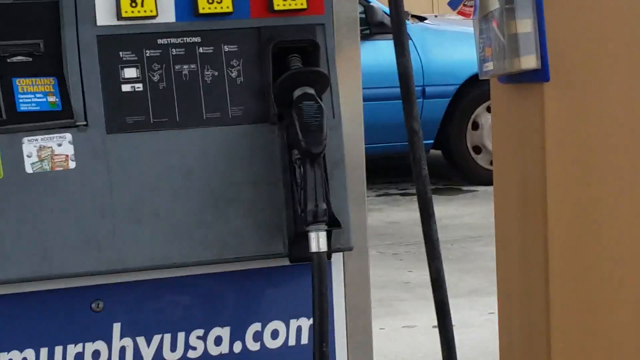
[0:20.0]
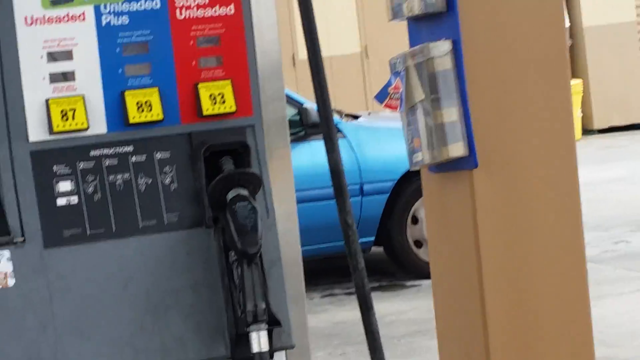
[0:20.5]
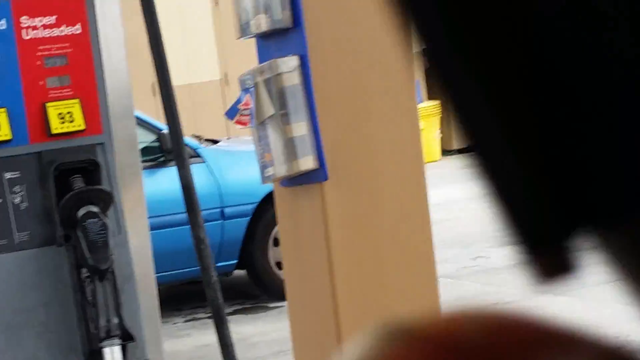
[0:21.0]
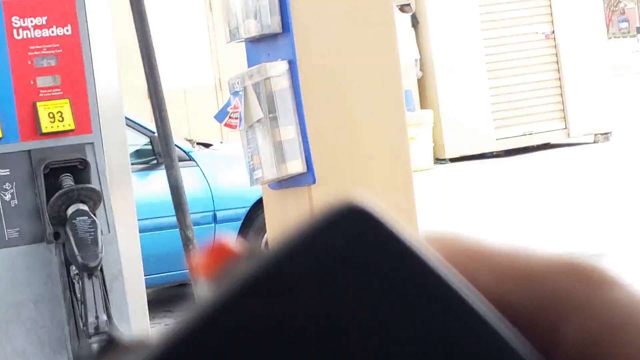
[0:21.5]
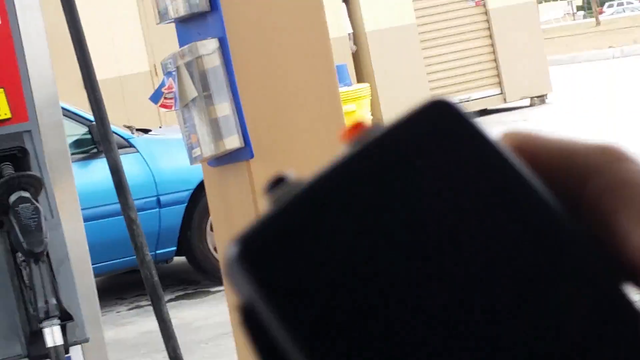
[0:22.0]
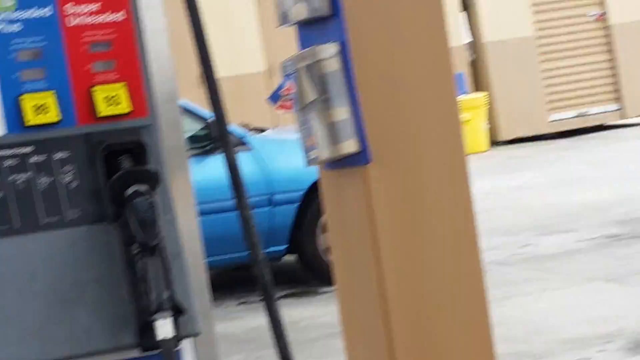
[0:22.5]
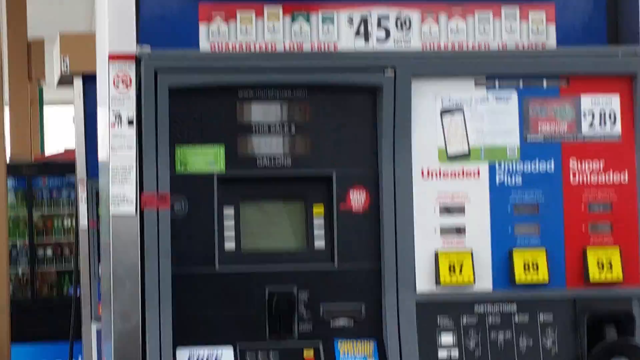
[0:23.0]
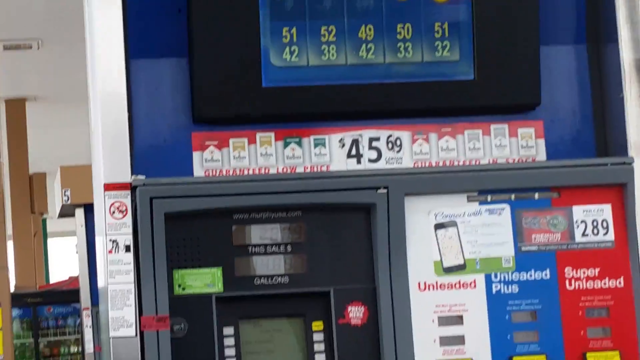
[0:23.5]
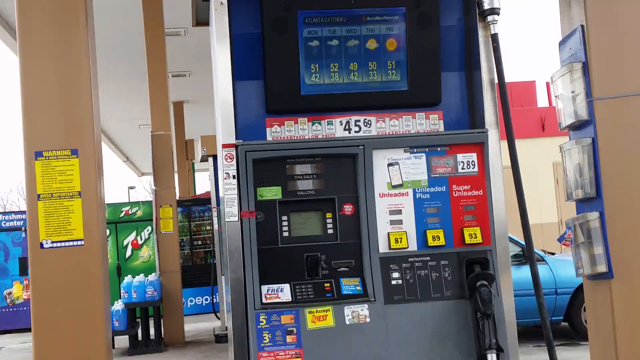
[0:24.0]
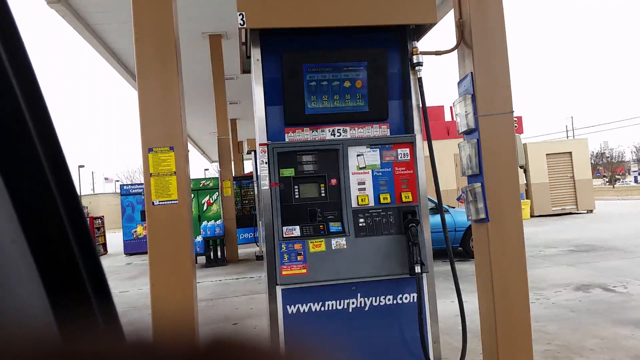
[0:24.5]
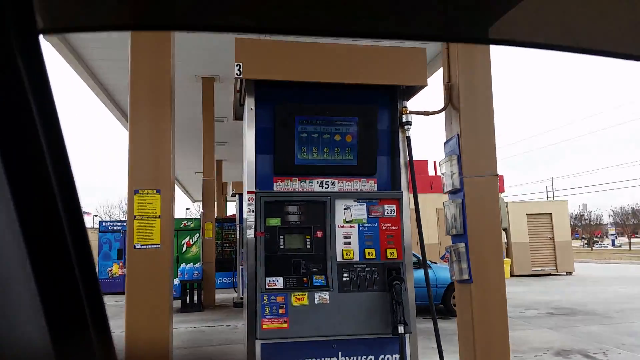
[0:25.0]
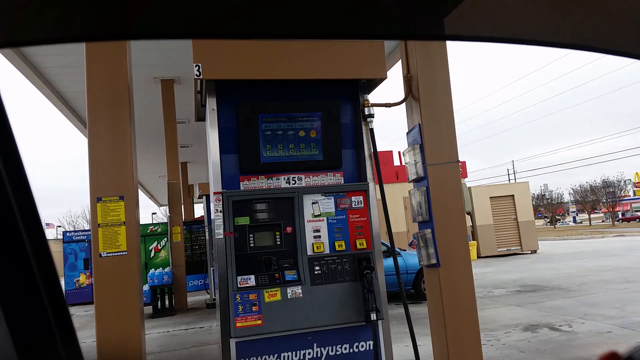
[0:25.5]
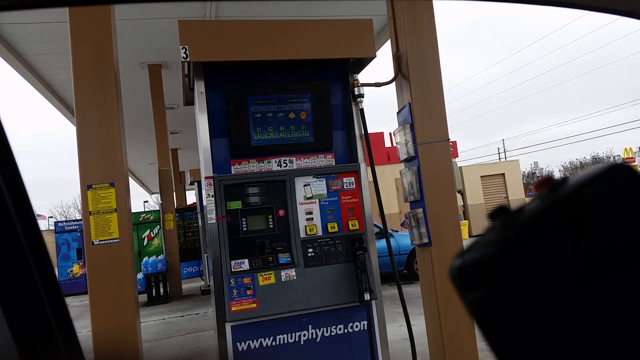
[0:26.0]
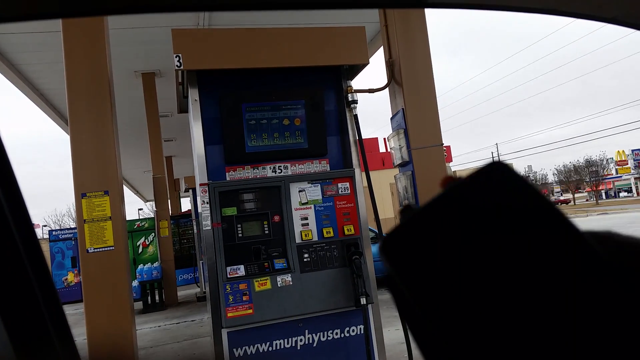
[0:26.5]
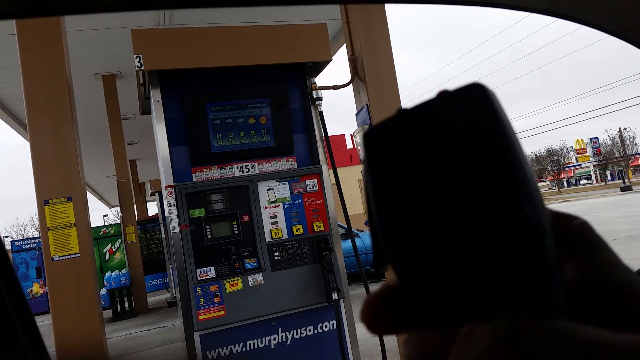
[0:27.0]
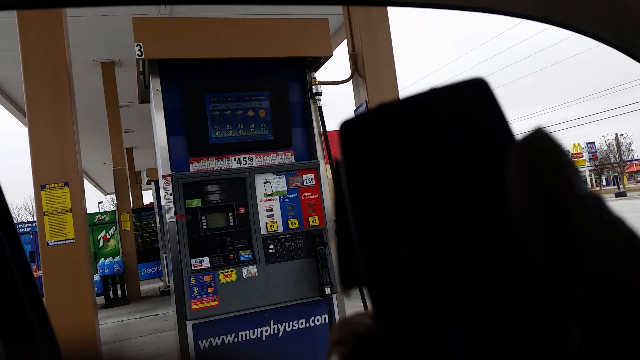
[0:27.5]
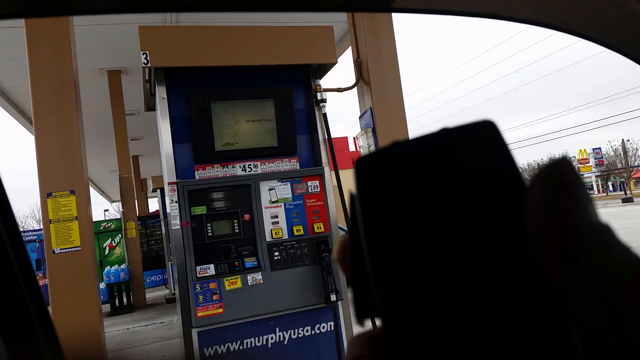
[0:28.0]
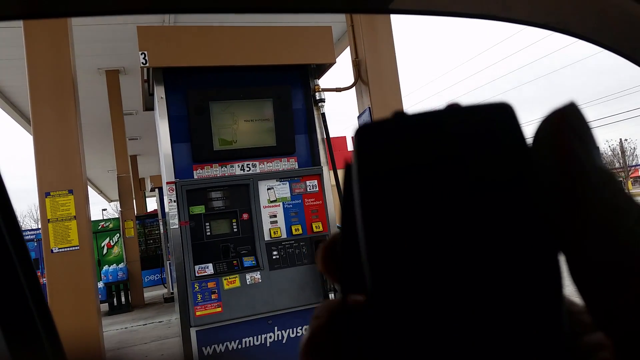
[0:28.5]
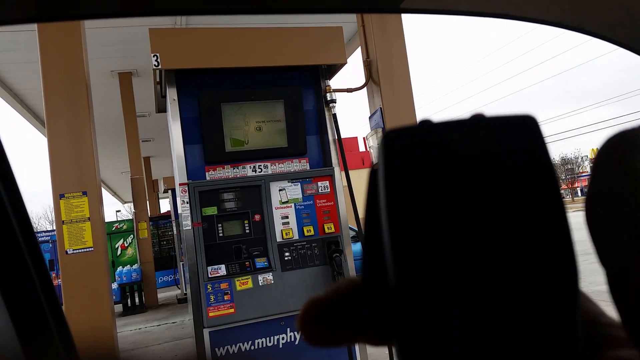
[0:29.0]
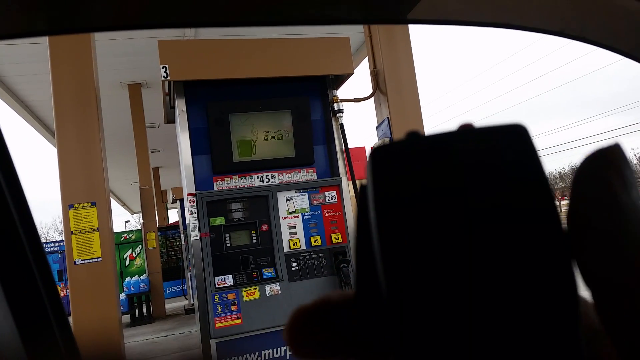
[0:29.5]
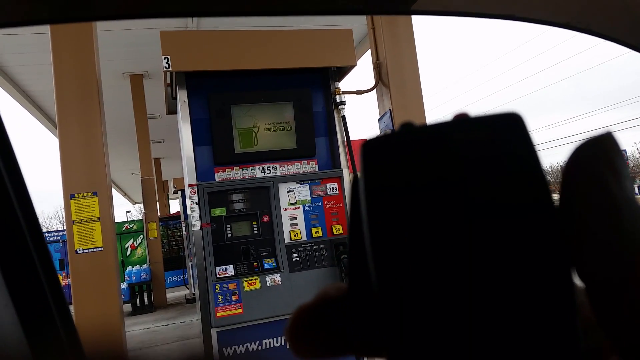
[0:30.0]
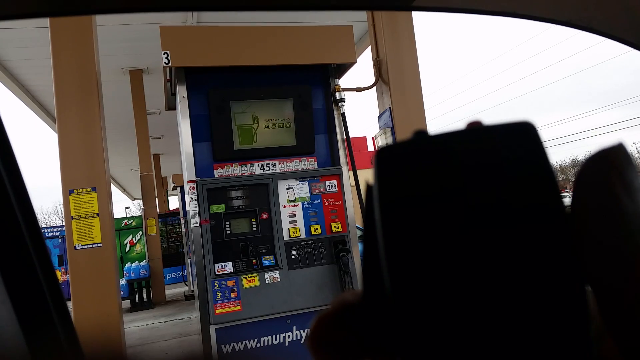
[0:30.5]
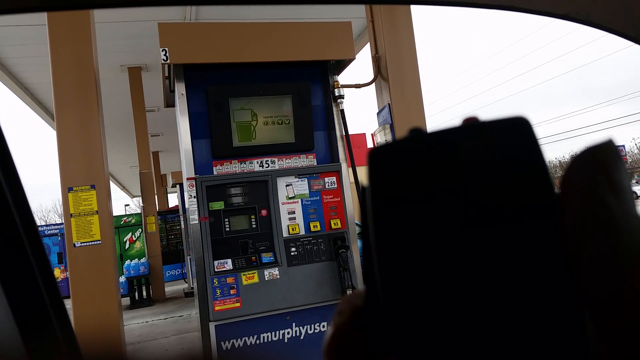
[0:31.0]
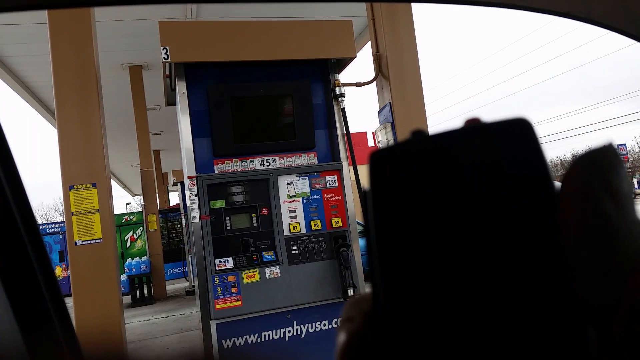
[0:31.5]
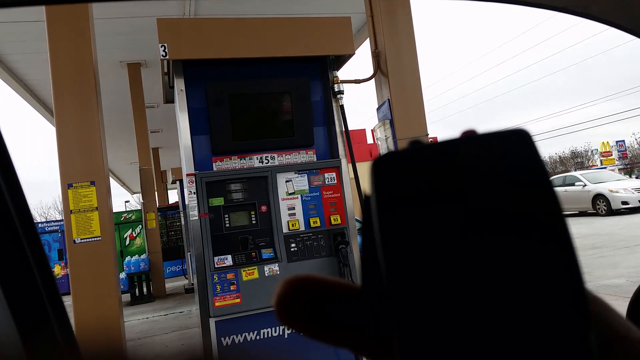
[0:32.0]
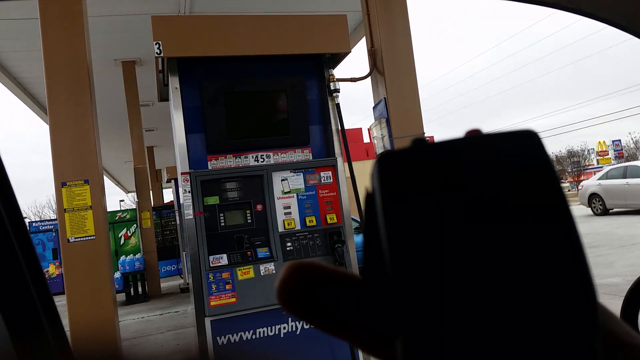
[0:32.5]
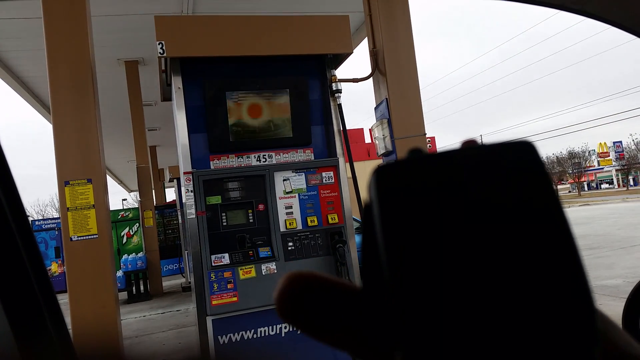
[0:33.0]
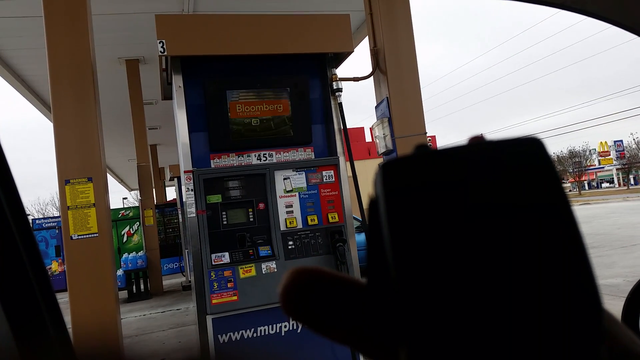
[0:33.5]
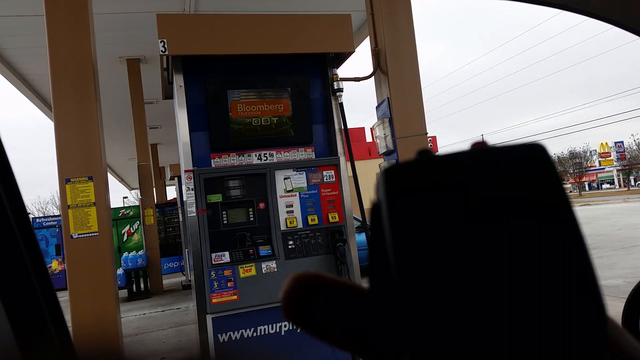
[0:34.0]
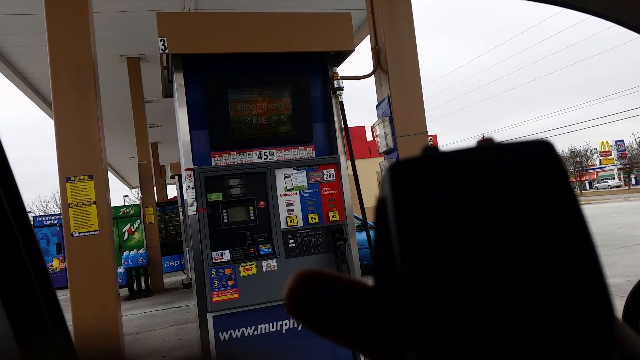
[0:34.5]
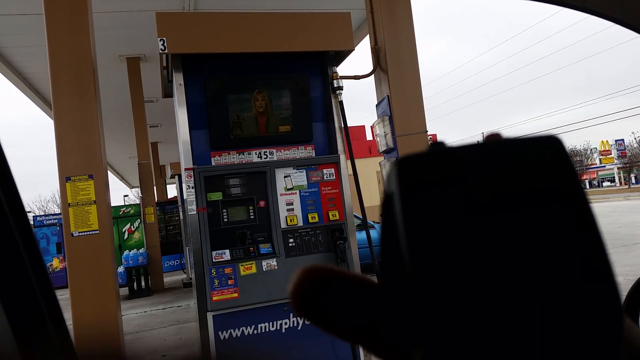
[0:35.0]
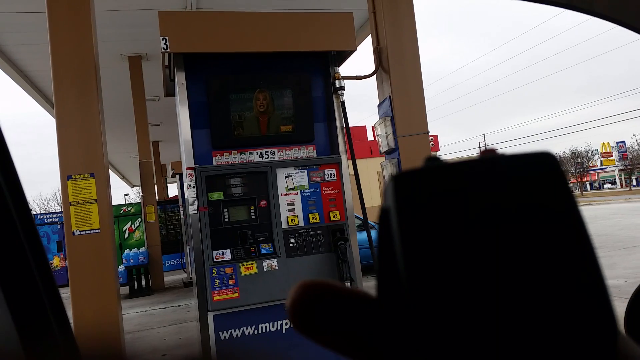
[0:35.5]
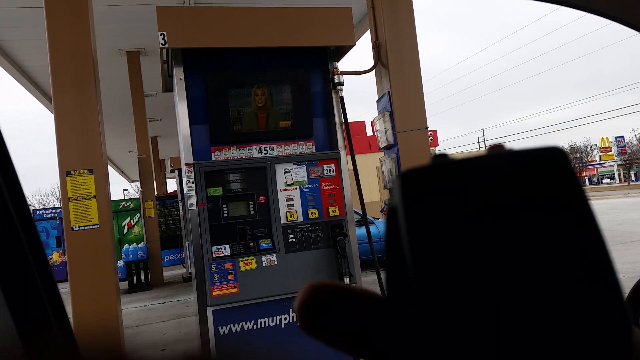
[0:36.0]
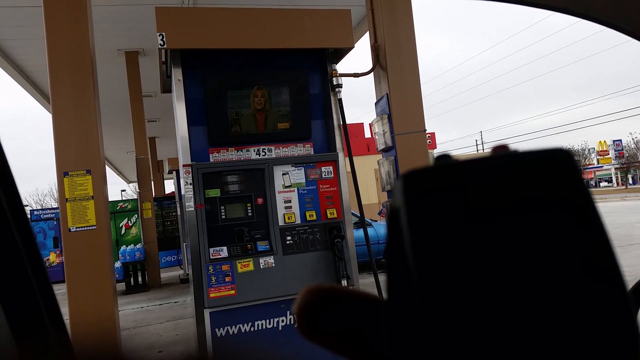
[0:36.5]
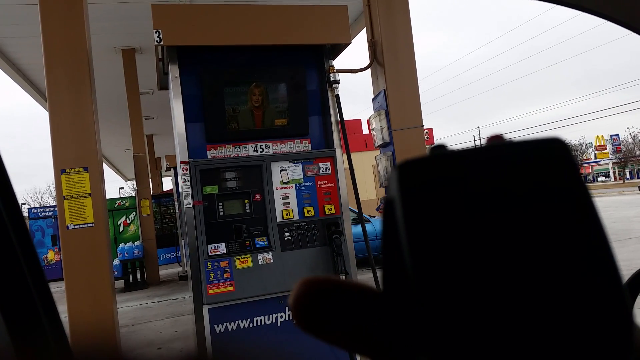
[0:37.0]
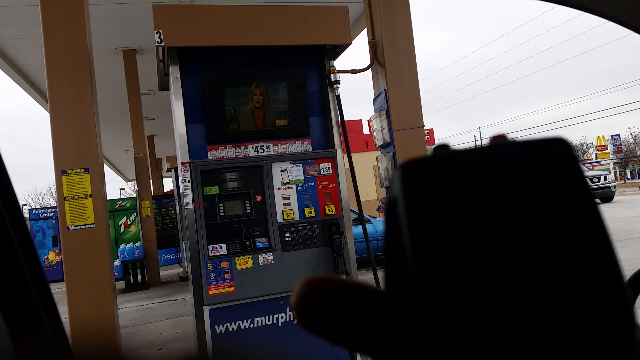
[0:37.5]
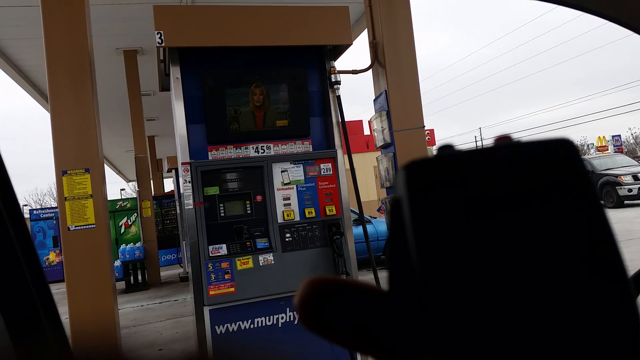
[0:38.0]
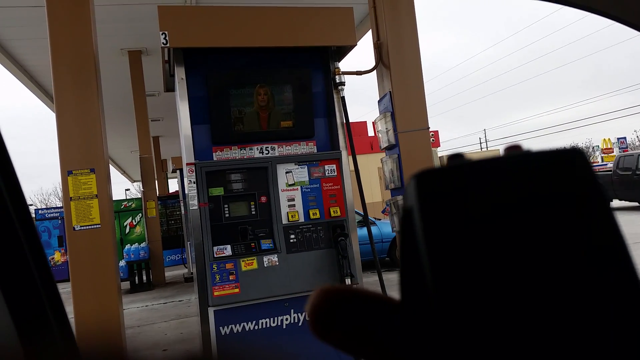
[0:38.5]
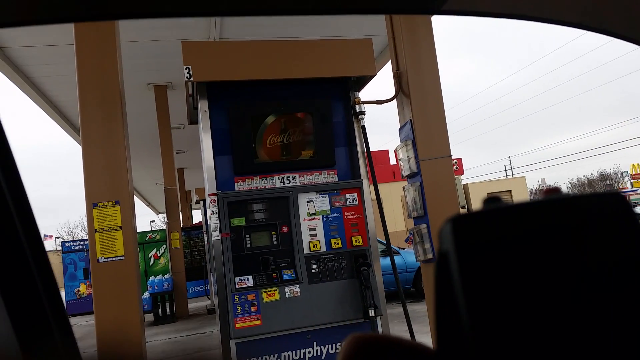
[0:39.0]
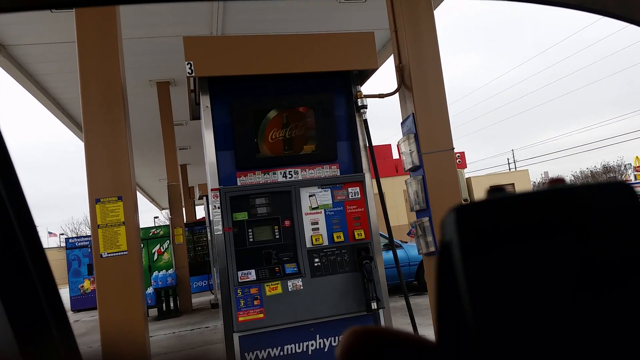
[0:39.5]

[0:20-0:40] The person who was filming the pump appears to be inside their car. They first do a close-up of the gas nozzle, then film something they are holding in their hand, which is hard to see. The device is unidentified, perhaps a remote or a taser; it is about the size of a large old-school BlackBerry or a small walkie-talkie, with a couple of nodules on top. They film their hand and the pump, and it looks as if, when they press the left-side button on the device, the image on the pump's screen changes, almost like a TV remote: it goes from the weather forecast to some information about the gas pump itself, and then what looks like a news broadcast comes on.